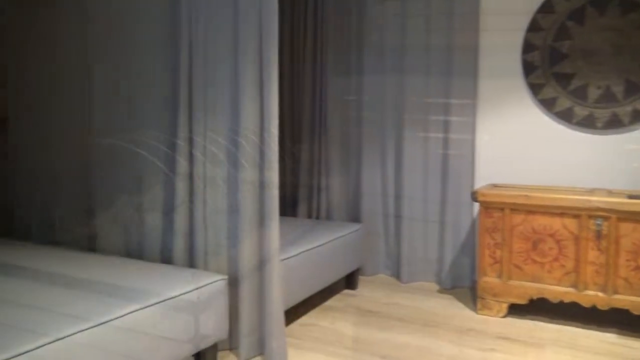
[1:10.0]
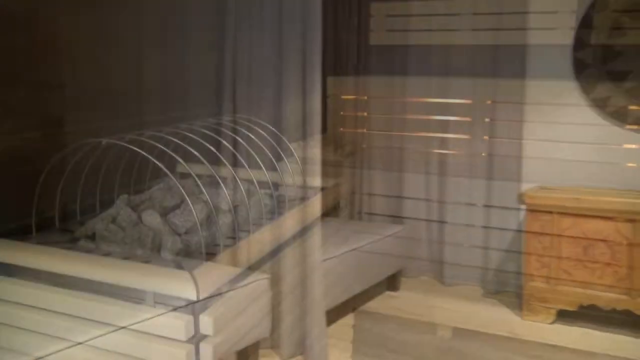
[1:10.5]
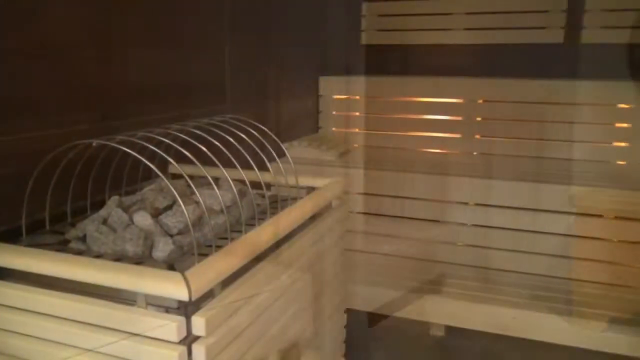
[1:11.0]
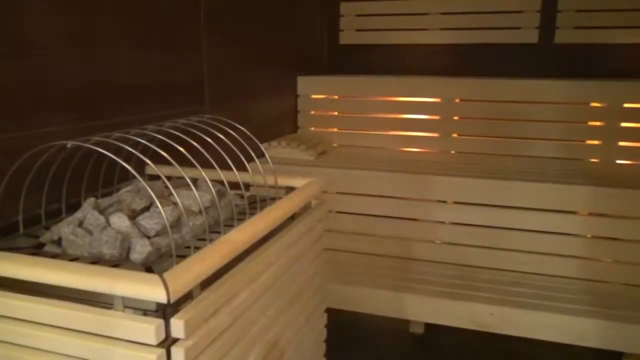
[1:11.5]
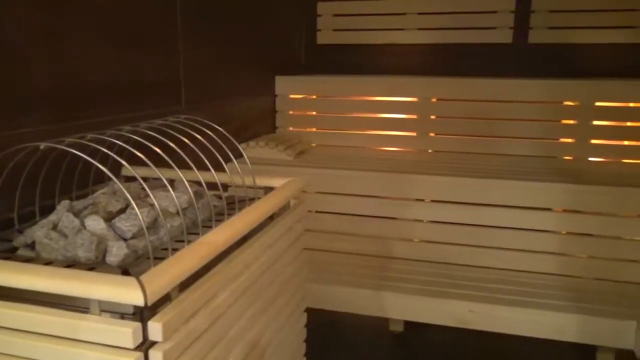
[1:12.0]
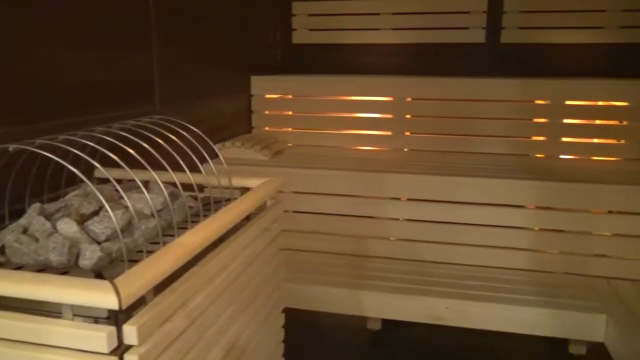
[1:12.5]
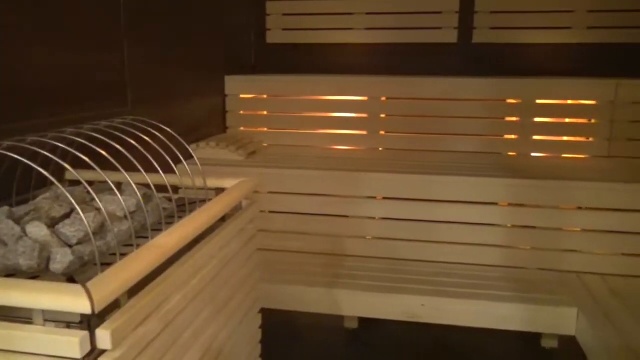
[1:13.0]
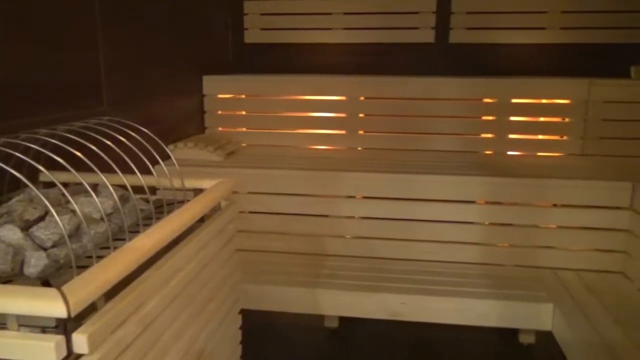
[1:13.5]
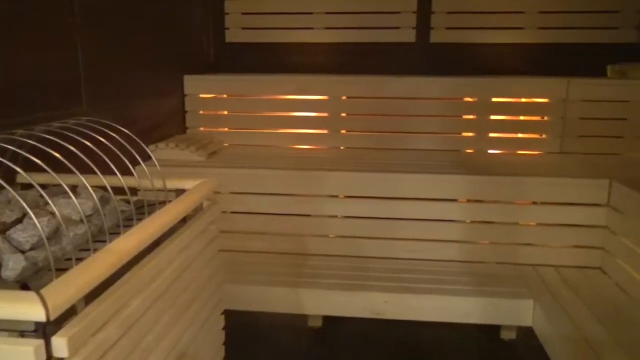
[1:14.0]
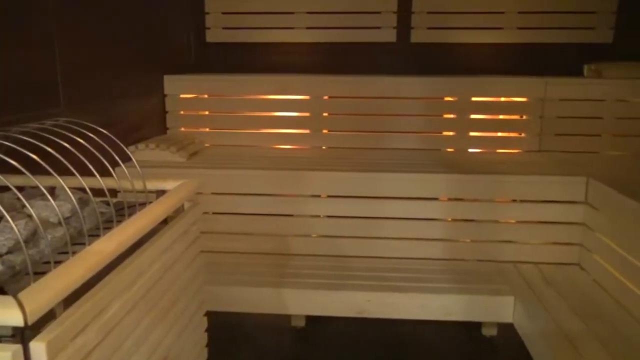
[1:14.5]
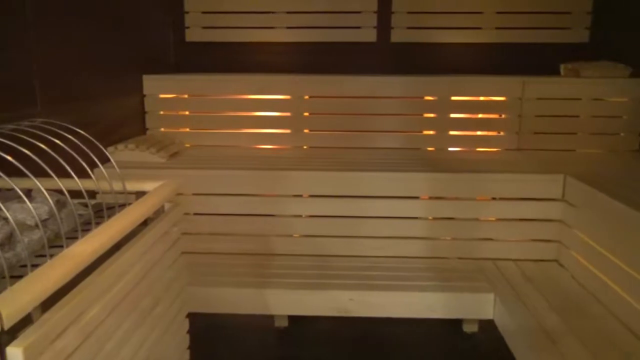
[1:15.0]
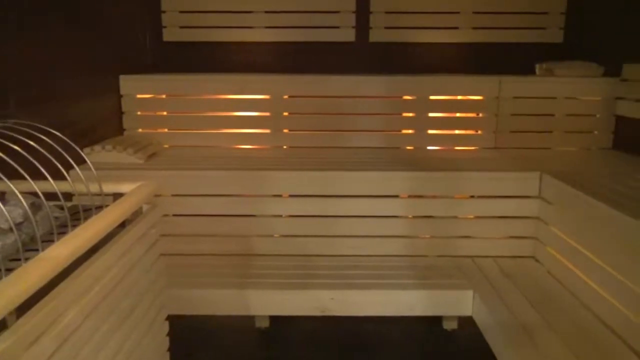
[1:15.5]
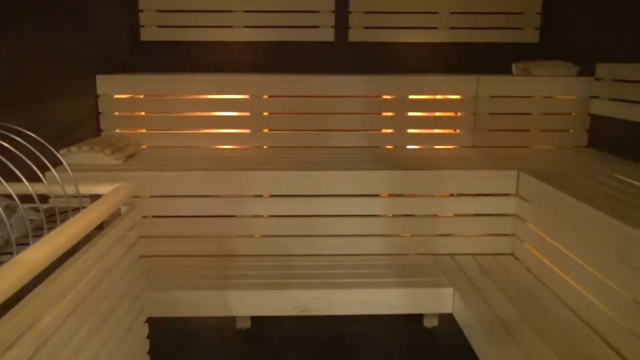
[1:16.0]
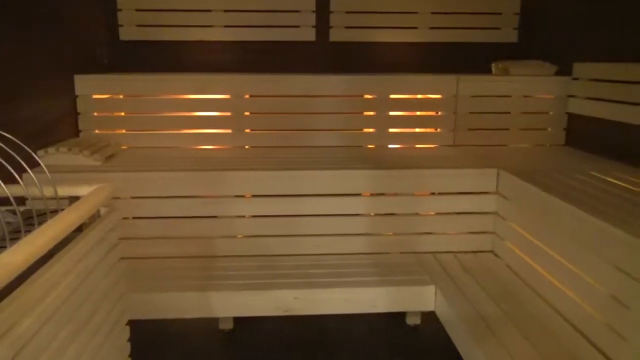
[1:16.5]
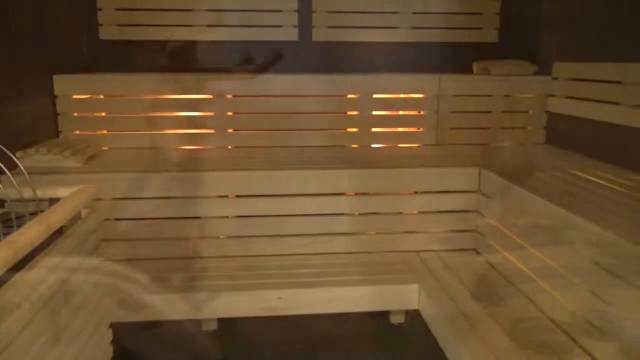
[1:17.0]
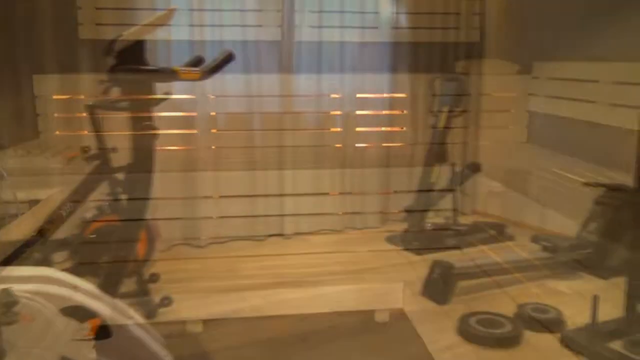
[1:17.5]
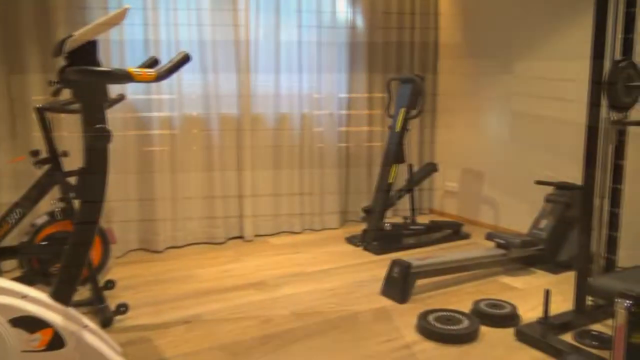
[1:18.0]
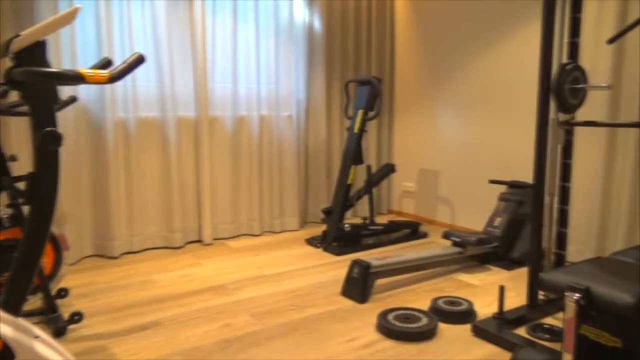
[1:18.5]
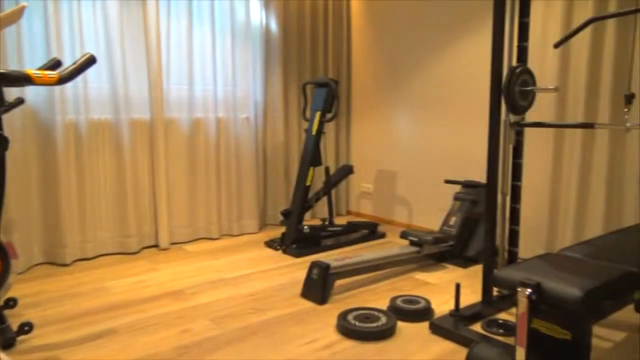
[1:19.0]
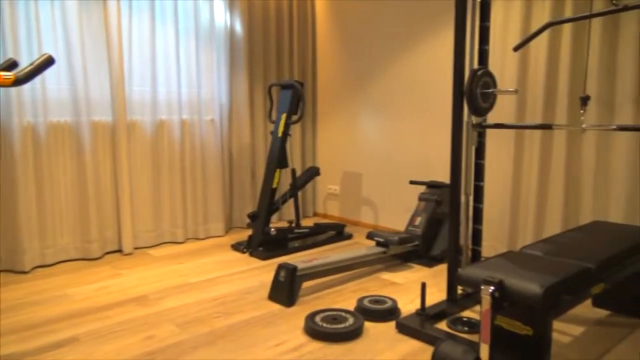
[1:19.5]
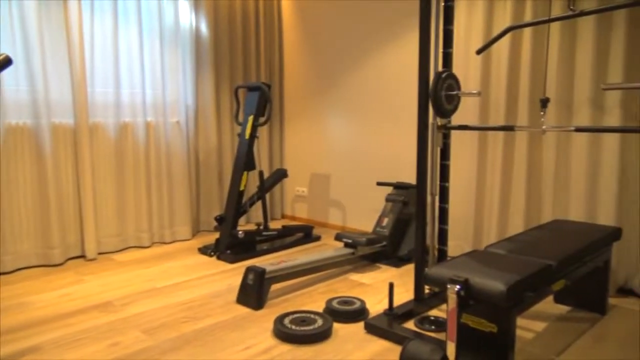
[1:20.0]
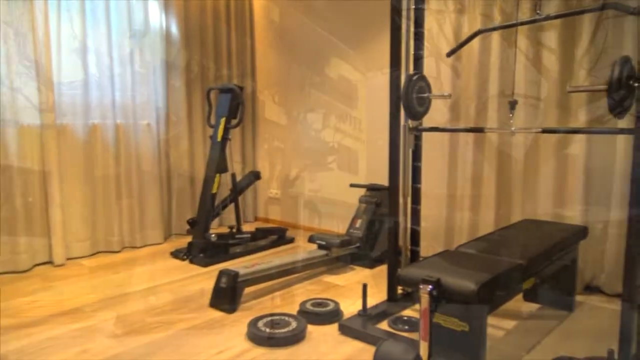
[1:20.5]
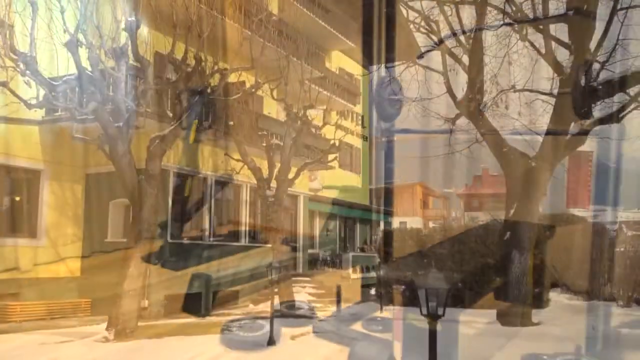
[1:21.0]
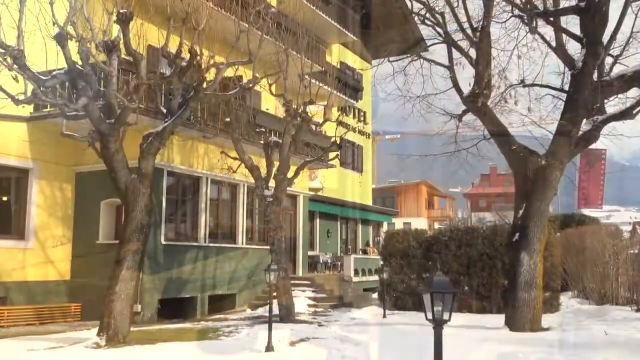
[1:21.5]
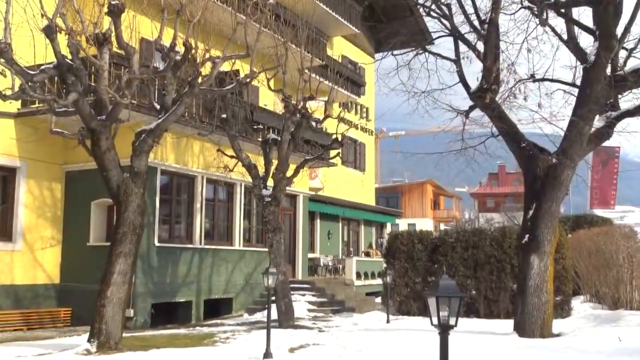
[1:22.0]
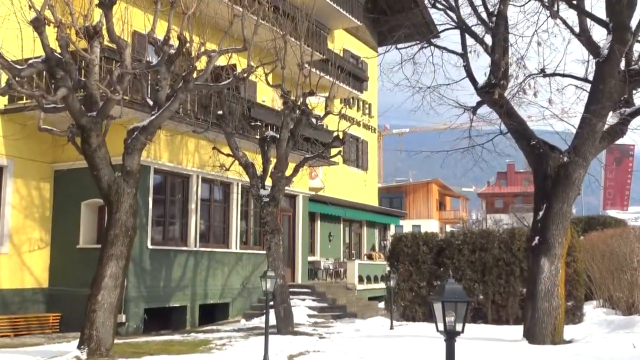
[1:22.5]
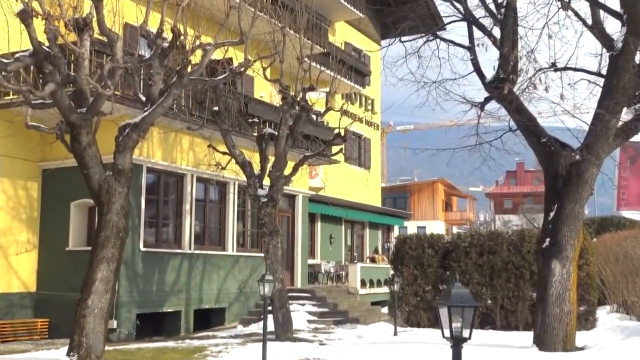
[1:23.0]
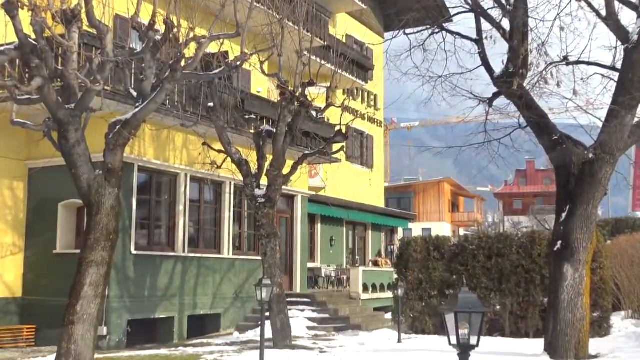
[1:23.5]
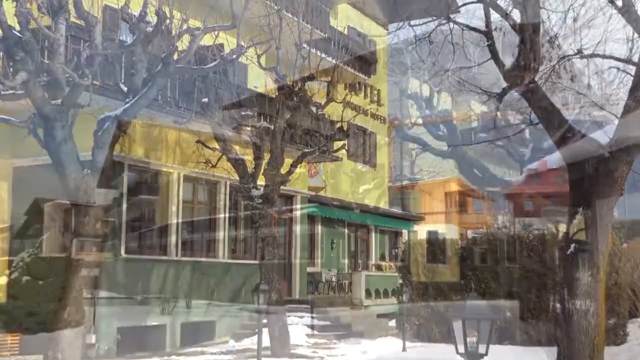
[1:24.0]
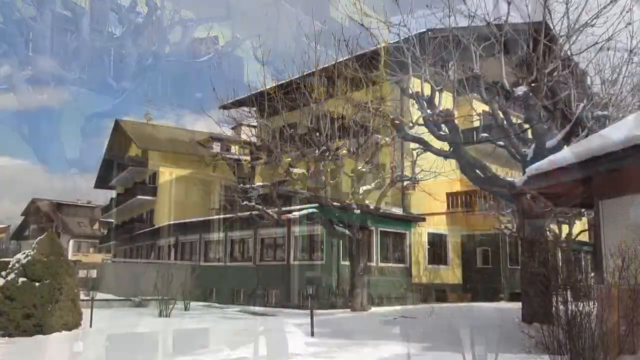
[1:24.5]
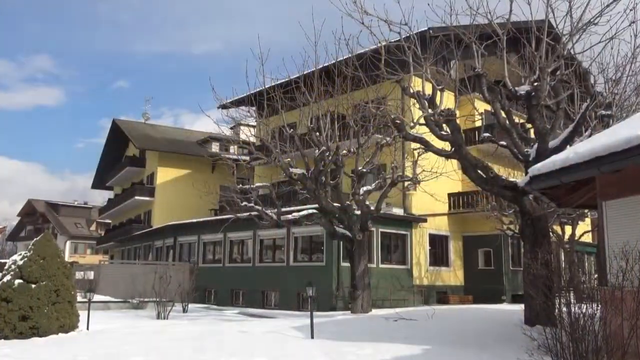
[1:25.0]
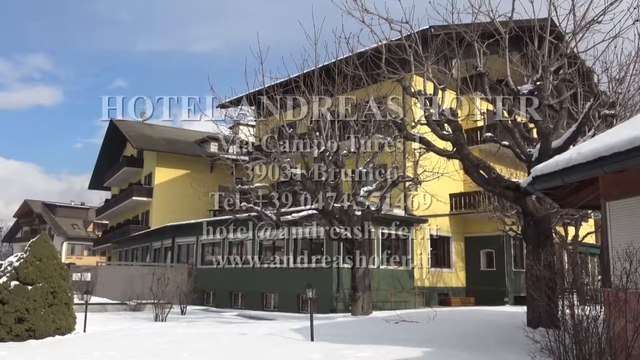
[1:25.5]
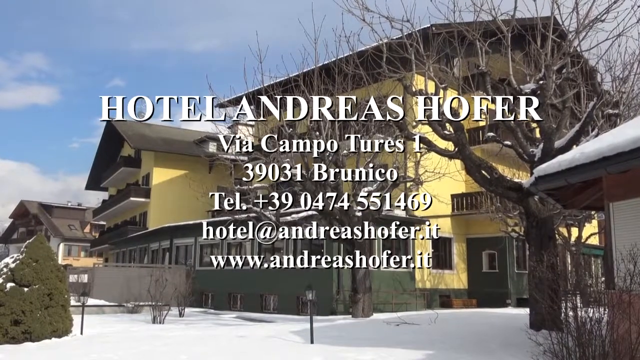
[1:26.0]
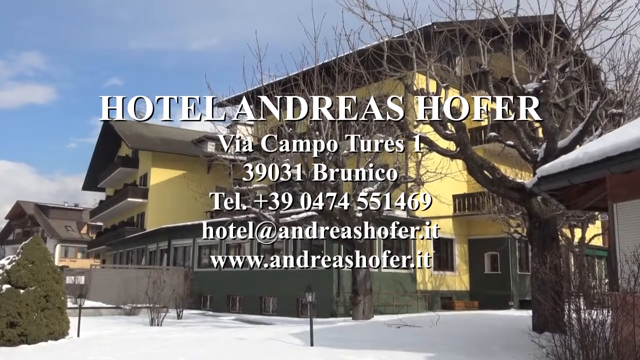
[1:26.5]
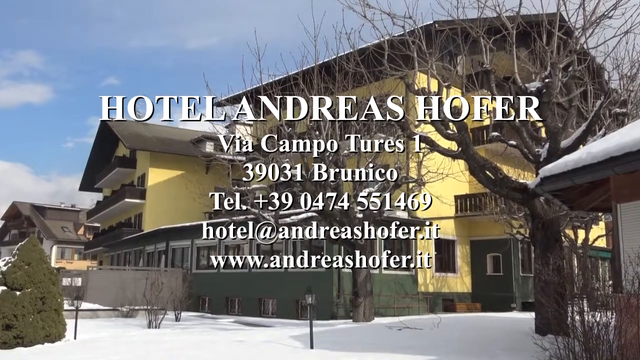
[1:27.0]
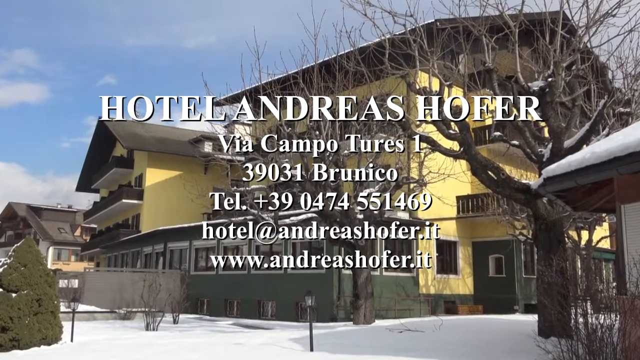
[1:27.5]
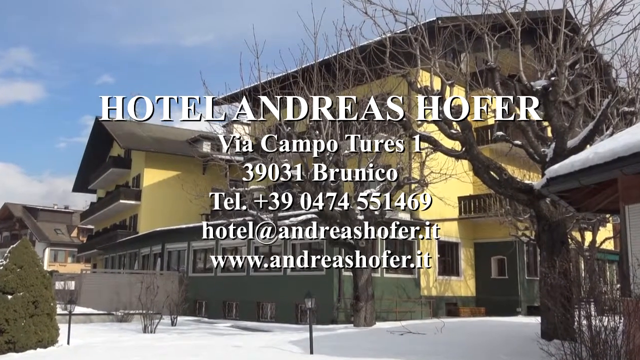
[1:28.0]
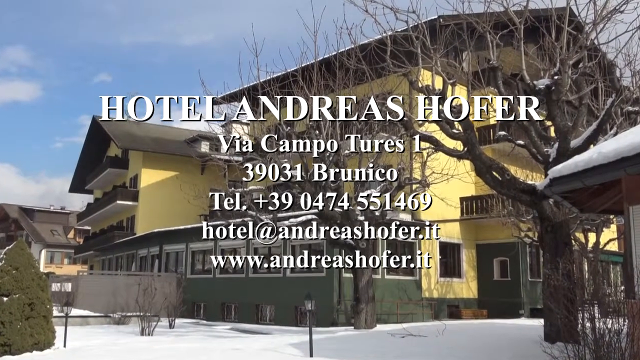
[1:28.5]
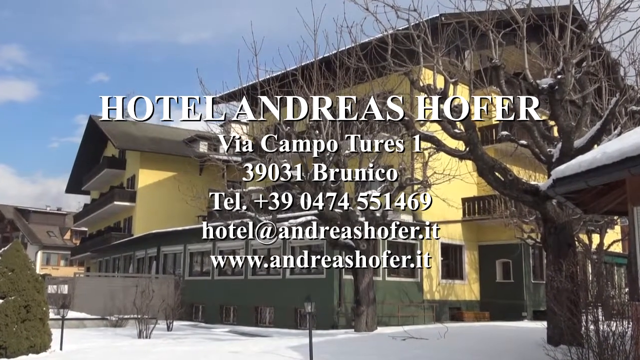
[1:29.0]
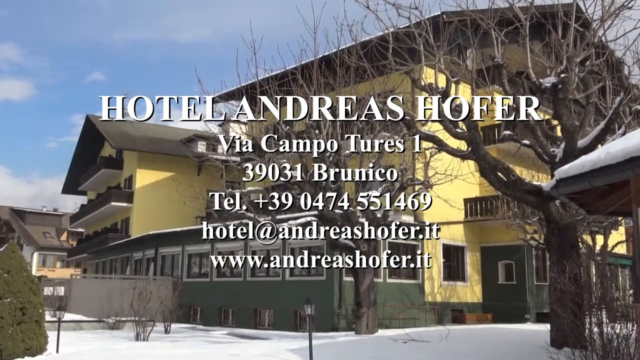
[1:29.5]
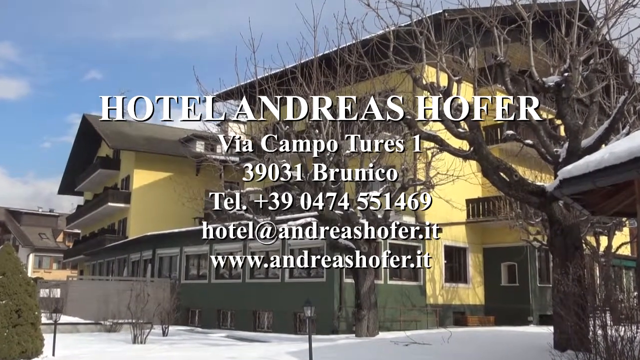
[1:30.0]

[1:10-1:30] A room transitions directly into a sauna, which has several wooden steps for seating. In the back of the sauna is a spot with limestone rocks covered with a protective barrier. The video then transitions to a workout room containing an elliptical, a rowing machine and other static pull-down machines. Next comes an exterior view of the hotel with snow on the ground and no leaves on the trees; three large trees are outside the hotel, suggesting the video was taken in winter. The video then transitions to another side of the hotel along with hotel information giving the address and name of the hotel: "Hotel Andreas Hofer, Via Campos Tures 1, 39031 Brunico", along with a telephone number and web addresses.